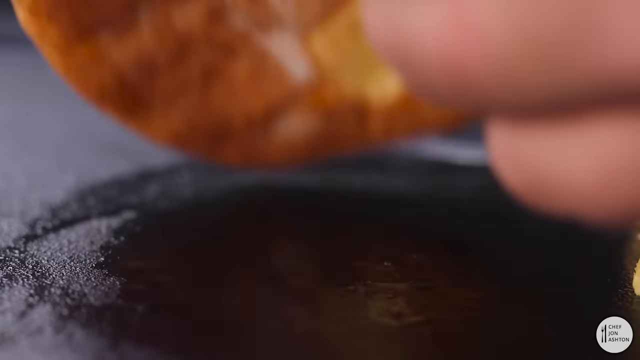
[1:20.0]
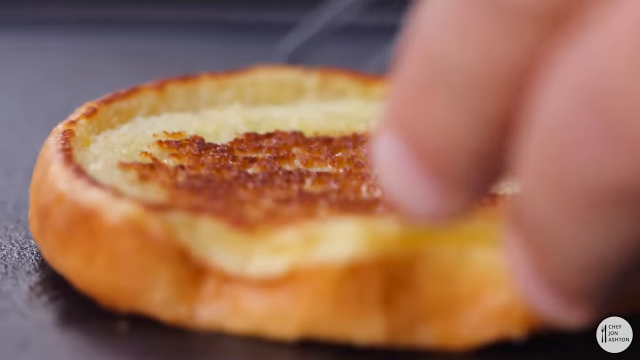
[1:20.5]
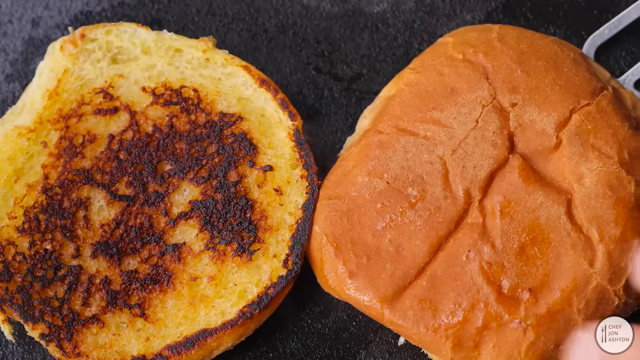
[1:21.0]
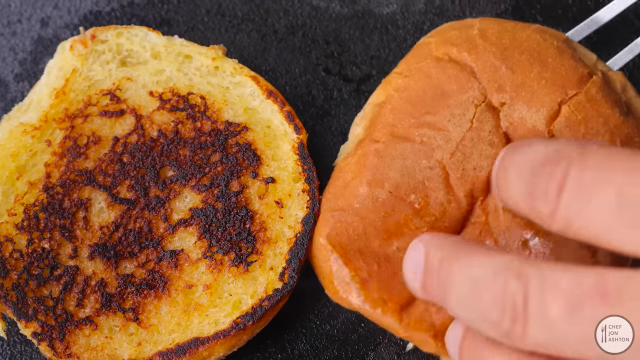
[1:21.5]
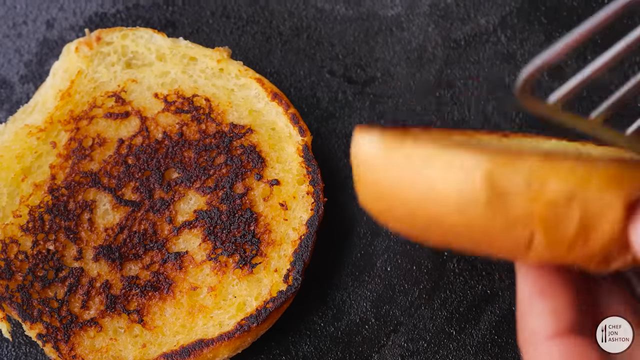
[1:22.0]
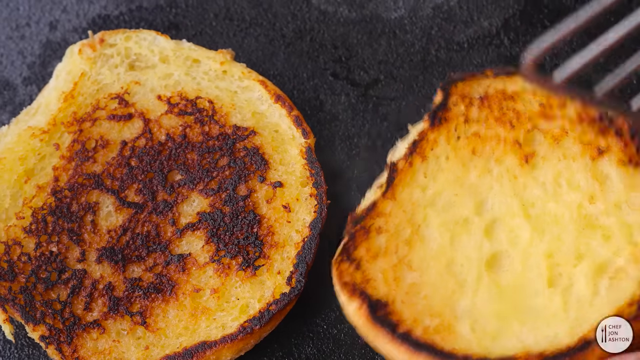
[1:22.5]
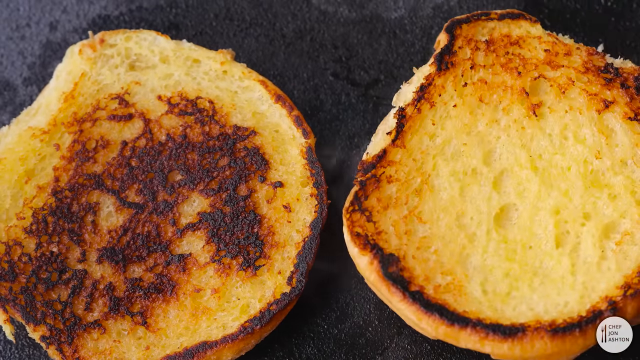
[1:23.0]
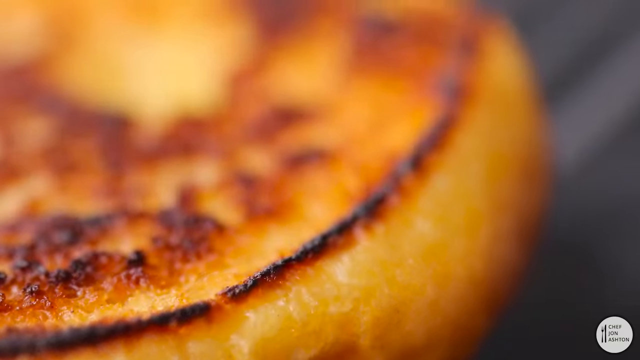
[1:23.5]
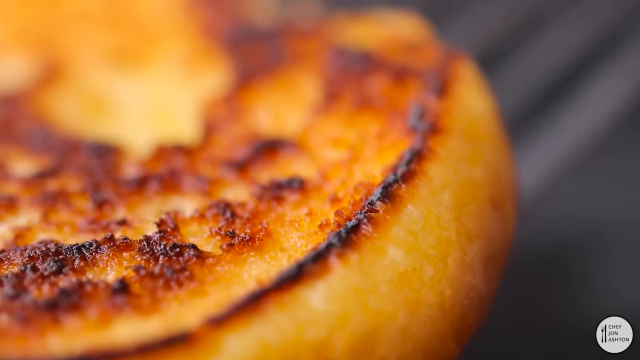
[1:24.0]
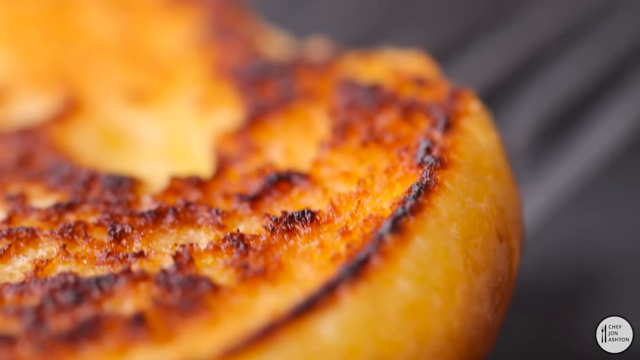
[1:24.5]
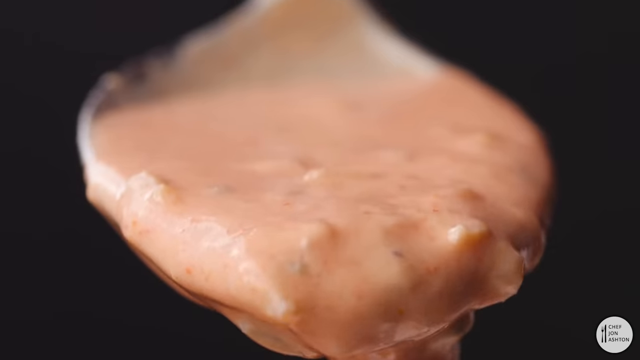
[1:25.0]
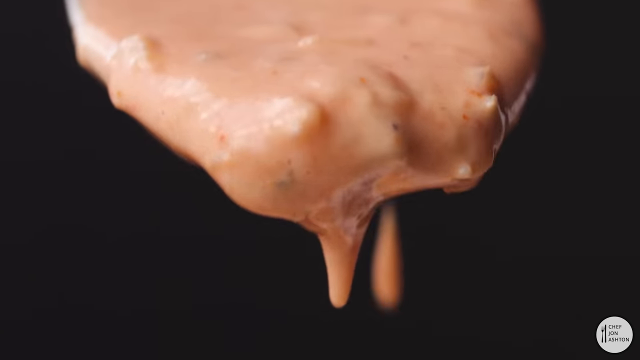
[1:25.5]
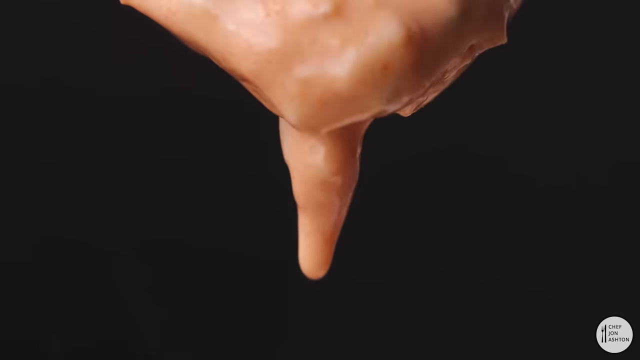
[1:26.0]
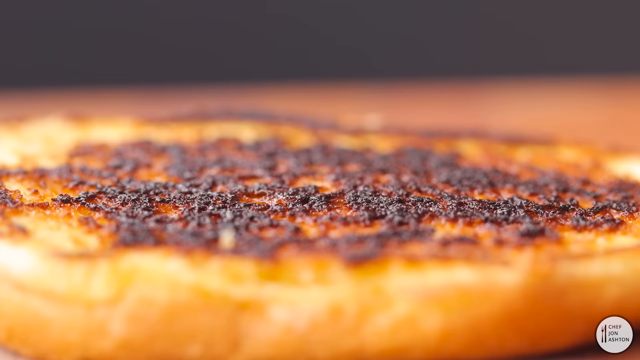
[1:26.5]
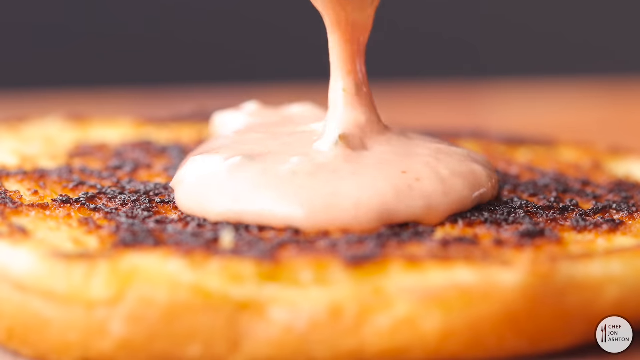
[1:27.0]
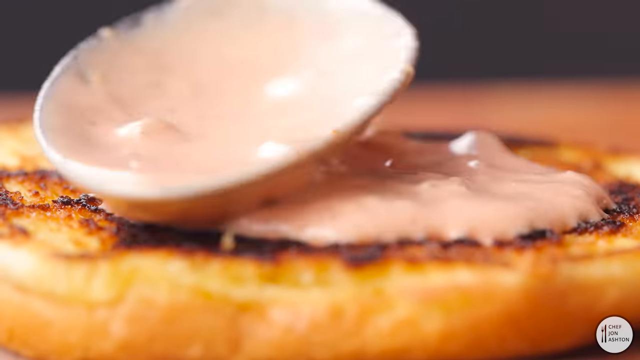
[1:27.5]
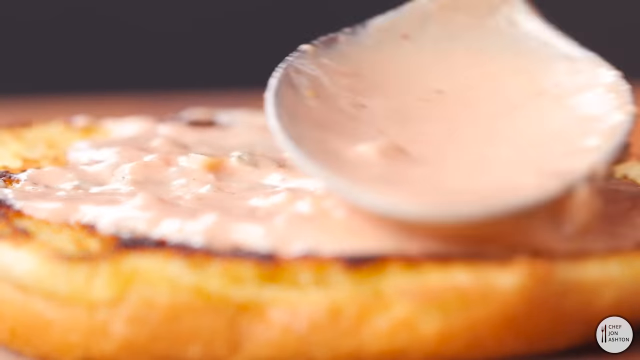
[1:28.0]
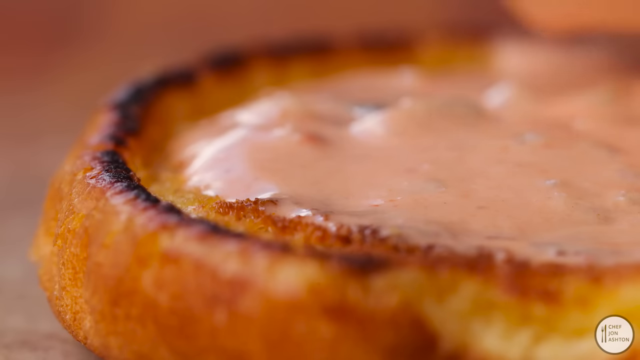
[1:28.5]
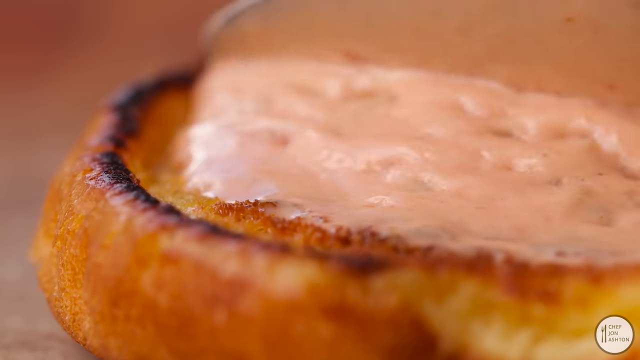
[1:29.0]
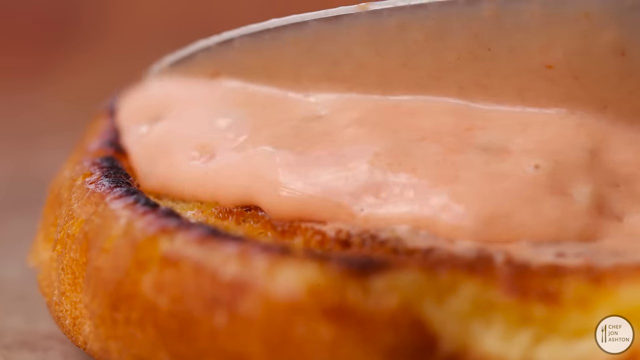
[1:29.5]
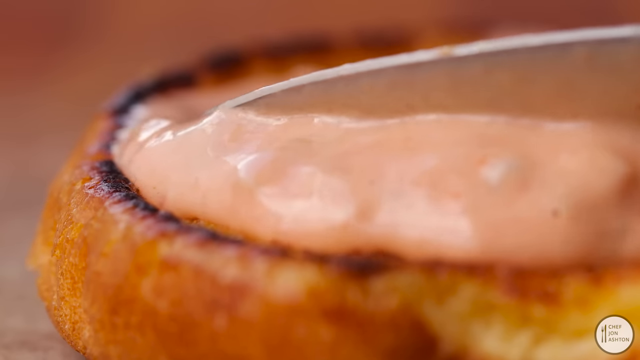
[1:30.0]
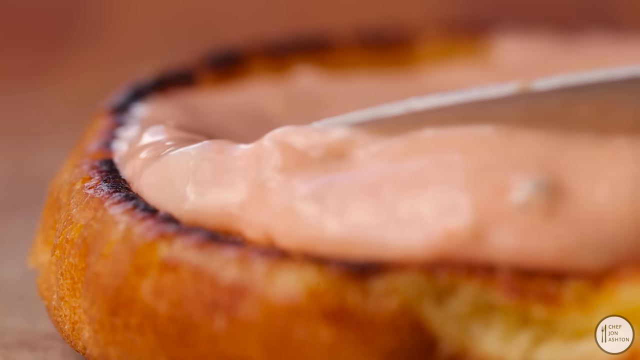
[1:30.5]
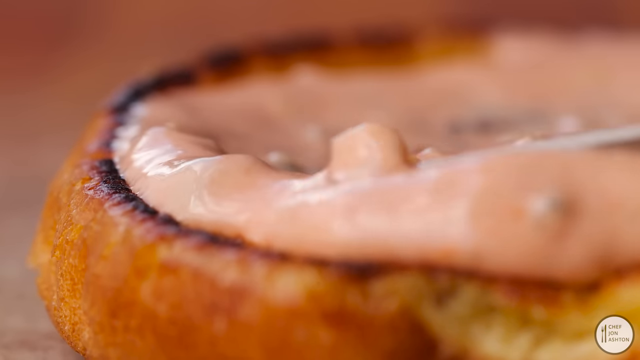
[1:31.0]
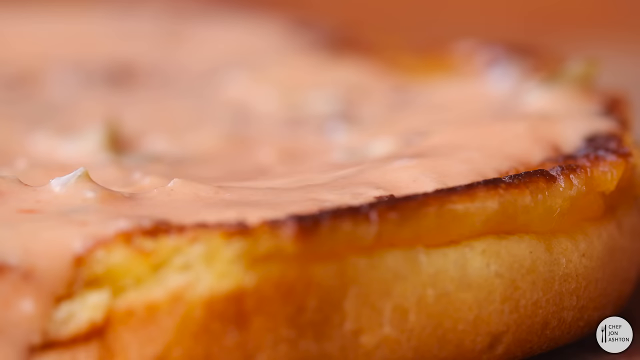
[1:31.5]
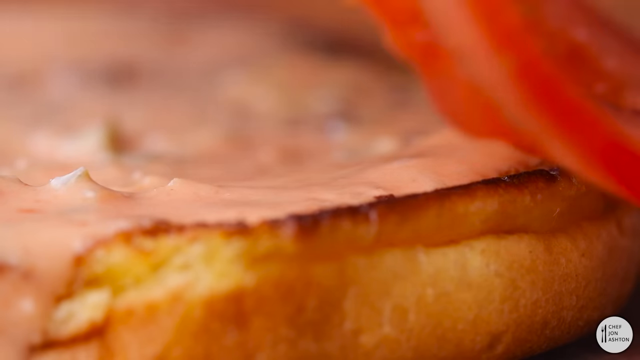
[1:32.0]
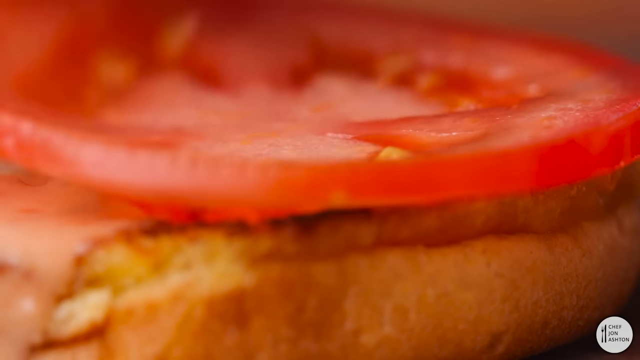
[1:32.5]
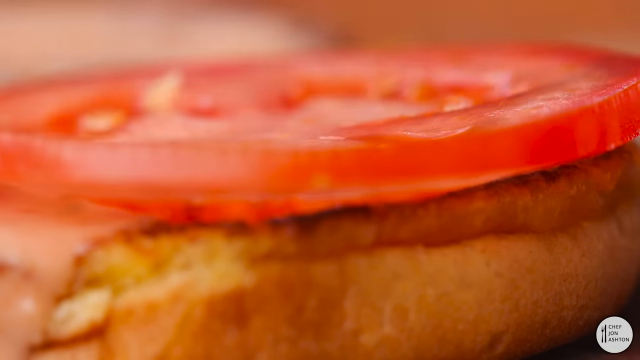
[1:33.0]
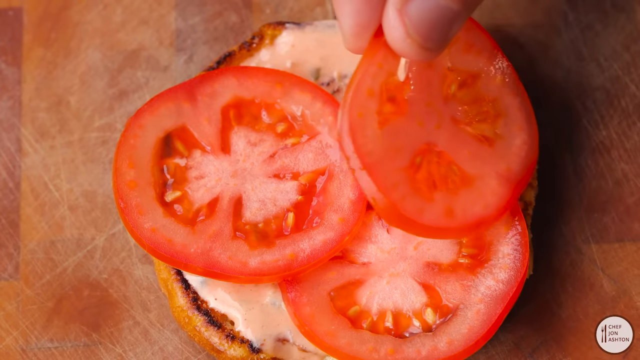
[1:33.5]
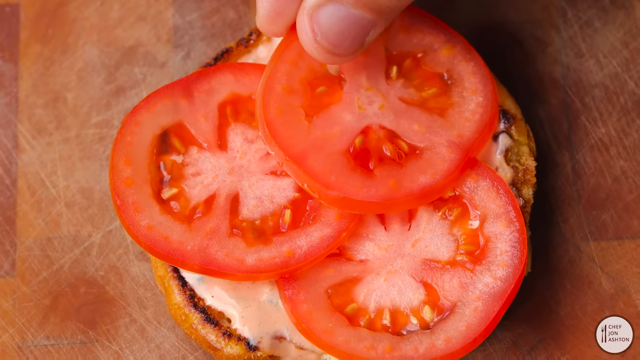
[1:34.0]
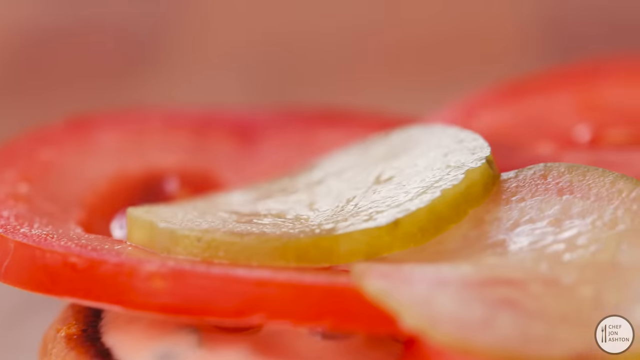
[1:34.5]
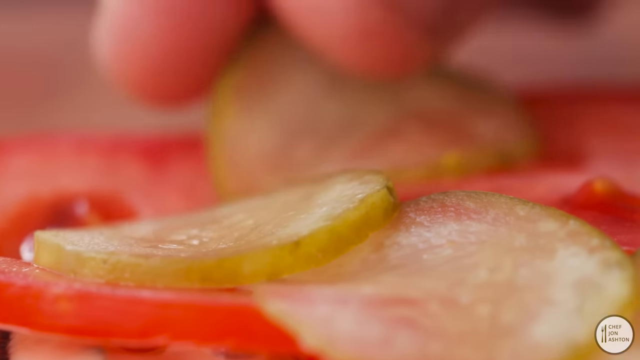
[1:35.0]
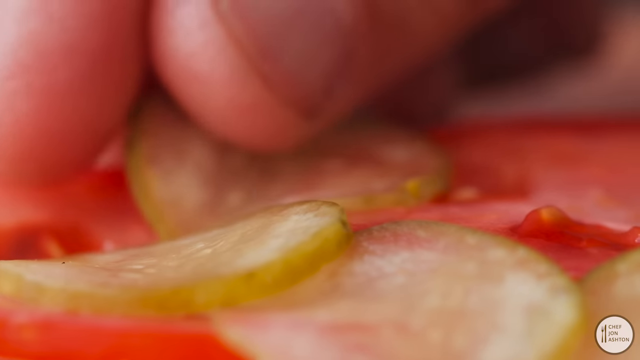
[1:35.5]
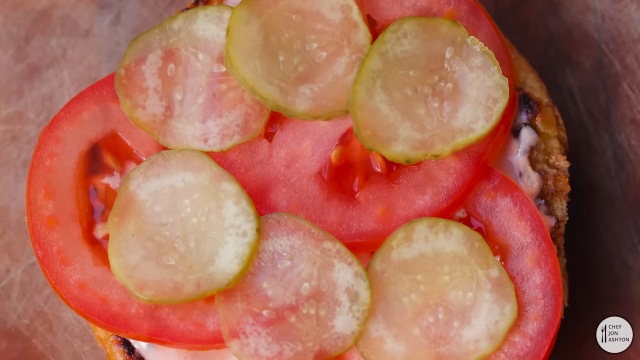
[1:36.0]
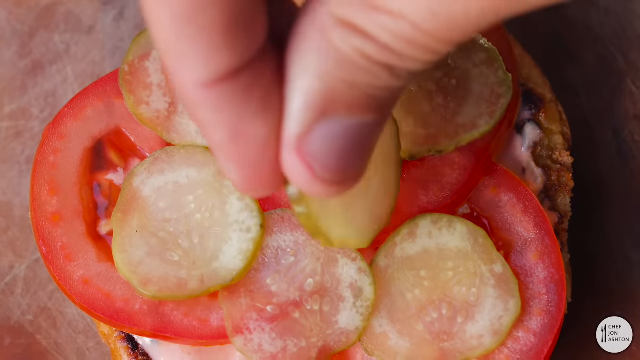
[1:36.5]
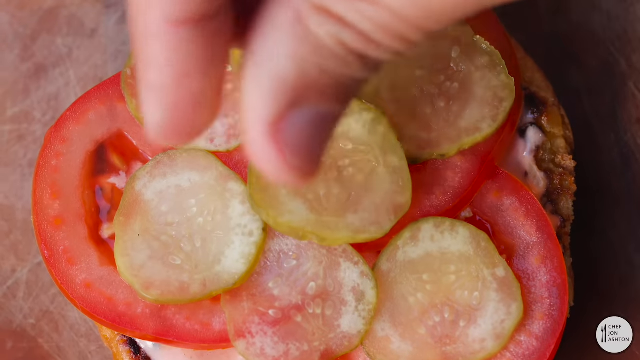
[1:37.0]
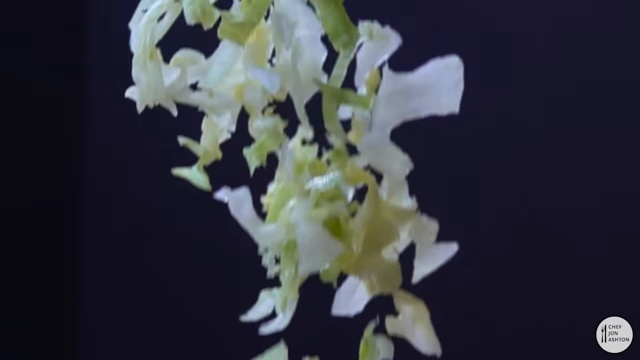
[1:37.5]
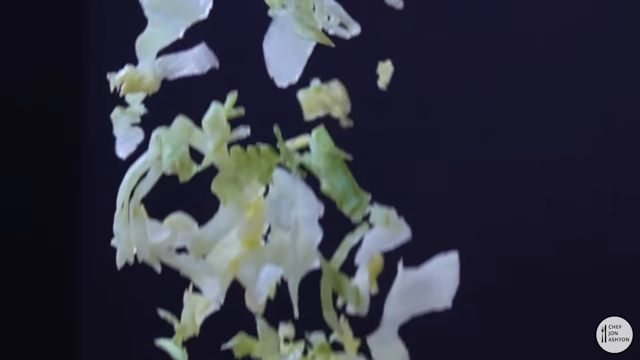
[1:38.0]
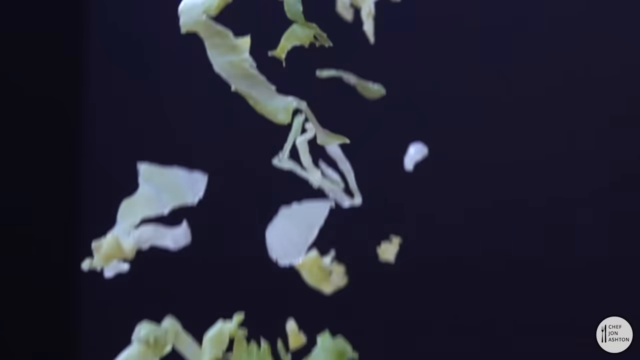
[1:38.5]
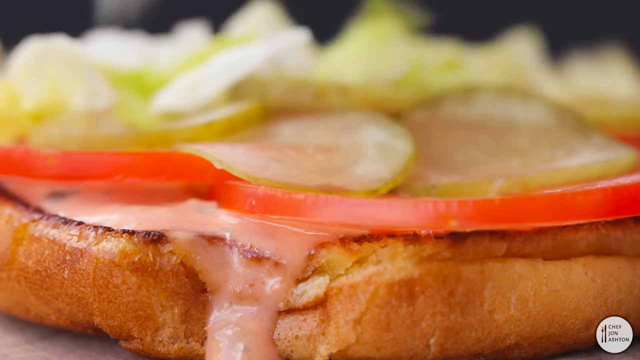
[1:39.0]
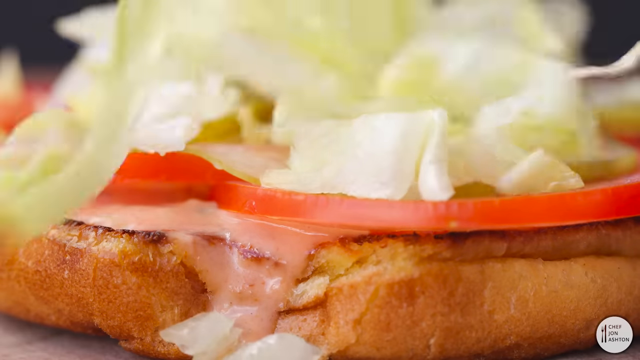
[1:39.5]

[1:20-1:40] A hand lays down the bottom of a hamburger bun, and then the top and bottom of the bun are shown side by side. Someone lifts the top bun with the spatula; the bun is possibly being toasted on a grill, and it is smoking or steaming. The top bun is flipped over onto its back. Some kind of grayish-looking sauce with little chunks in it is spread on the bottom bun with a spoon; it looks like it may be a kind of secret sauce used on hamburgers. Three tomato slices are laid on the bottom bun, followed by some pickle slices and then some lettuce.